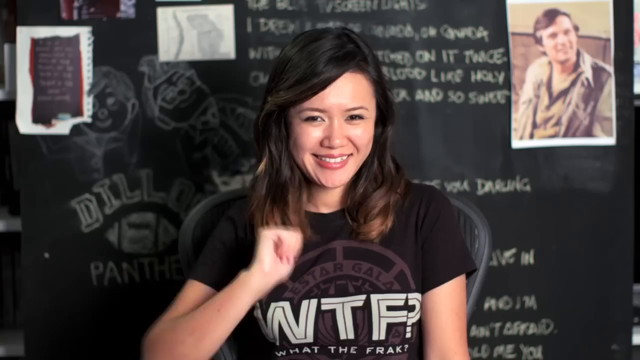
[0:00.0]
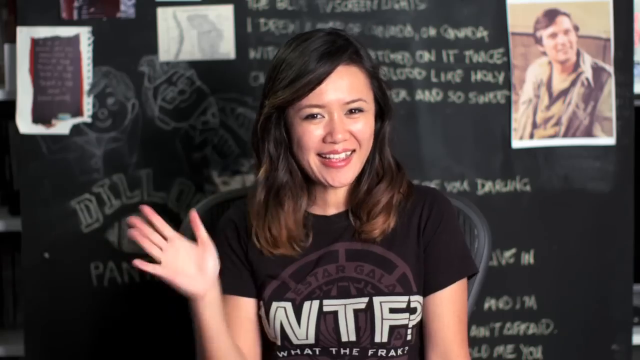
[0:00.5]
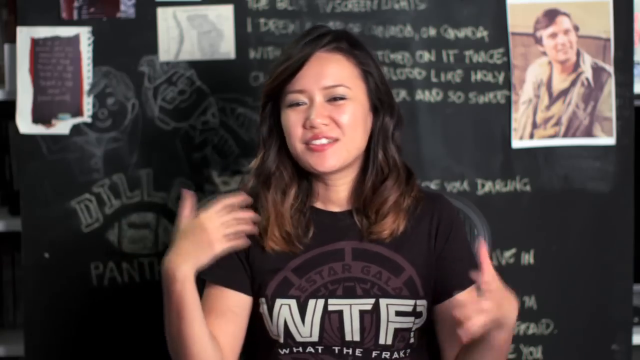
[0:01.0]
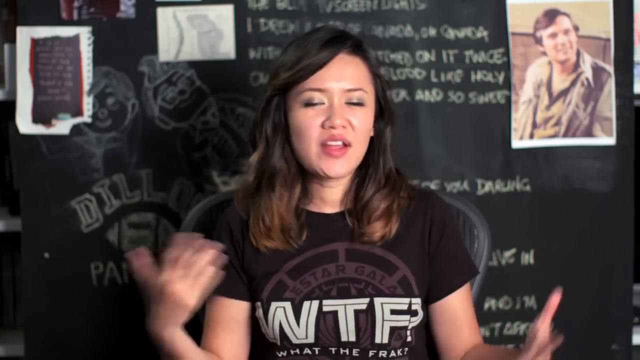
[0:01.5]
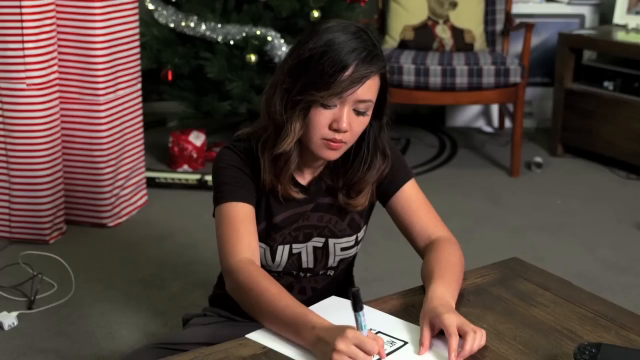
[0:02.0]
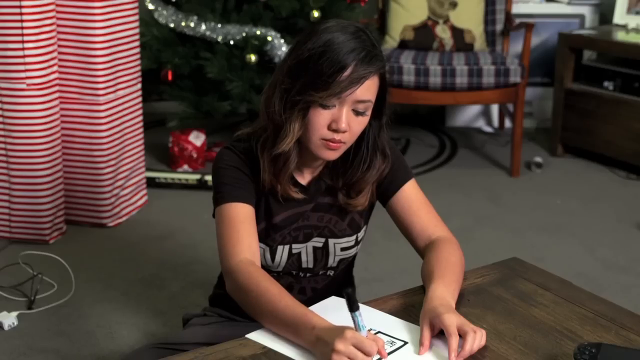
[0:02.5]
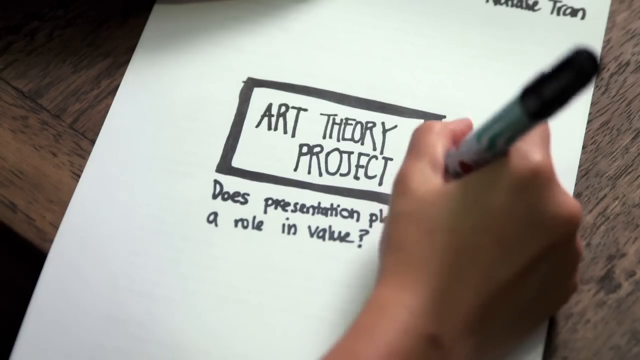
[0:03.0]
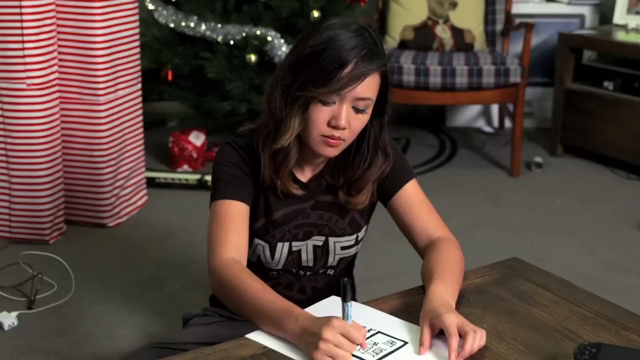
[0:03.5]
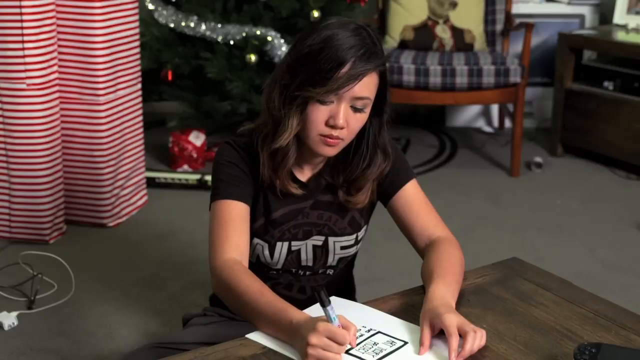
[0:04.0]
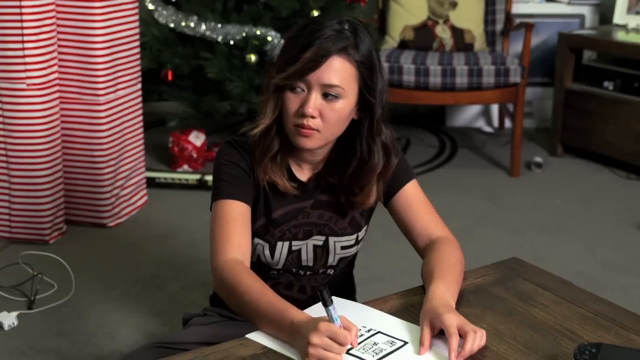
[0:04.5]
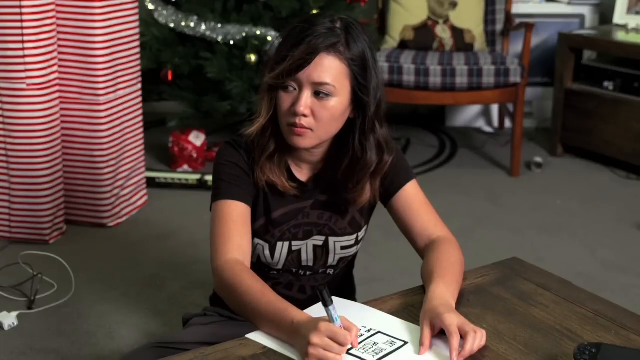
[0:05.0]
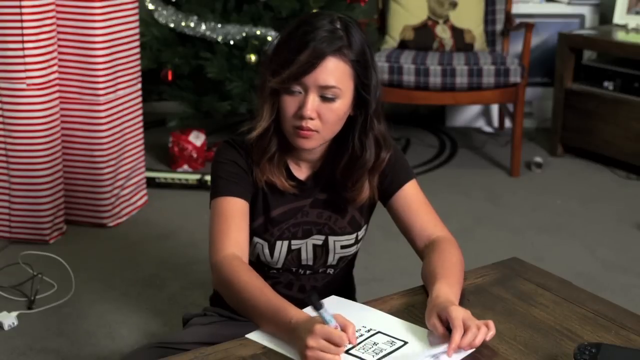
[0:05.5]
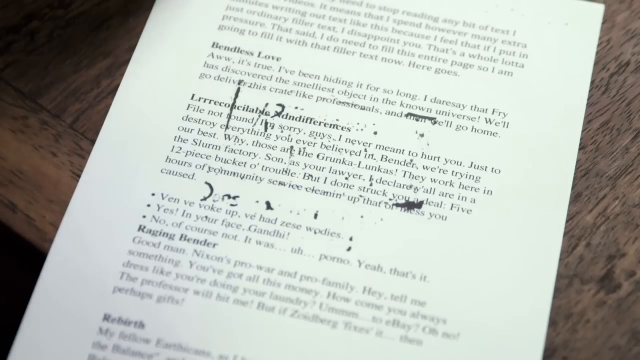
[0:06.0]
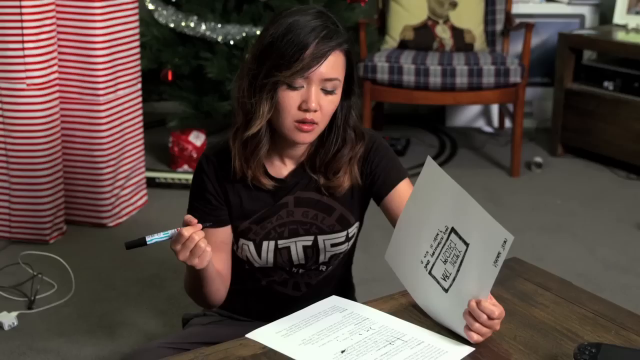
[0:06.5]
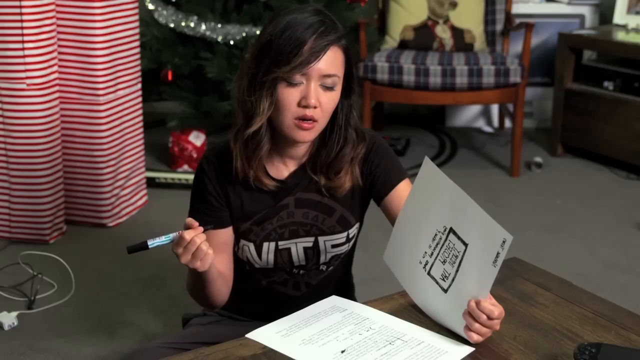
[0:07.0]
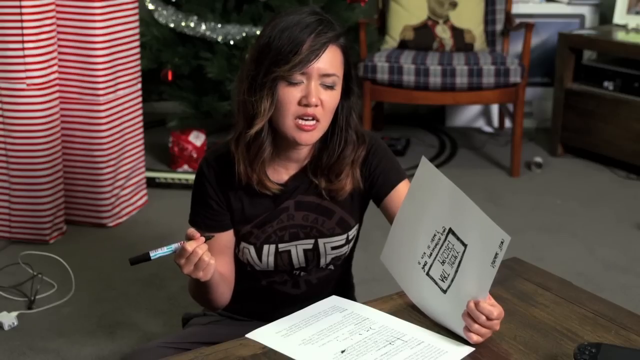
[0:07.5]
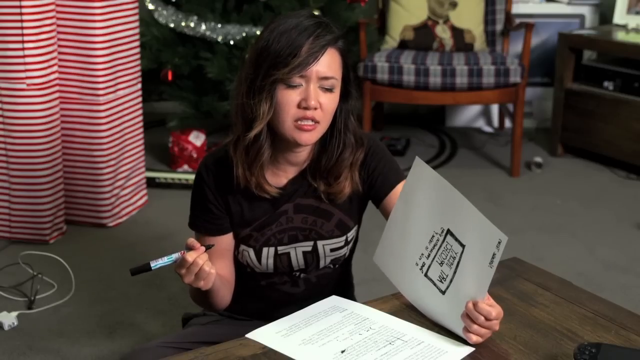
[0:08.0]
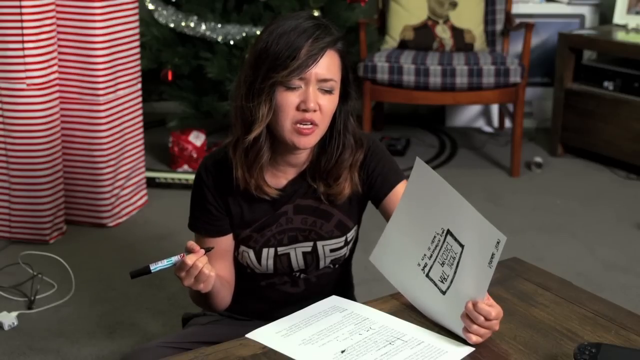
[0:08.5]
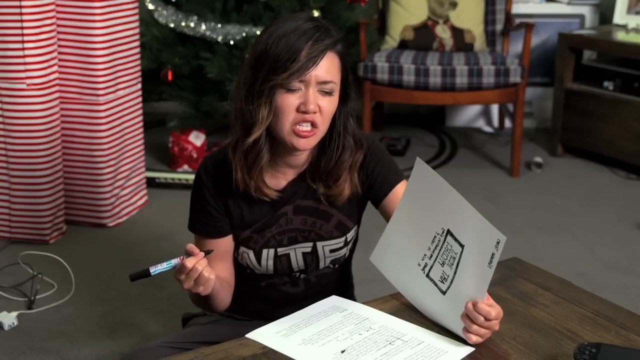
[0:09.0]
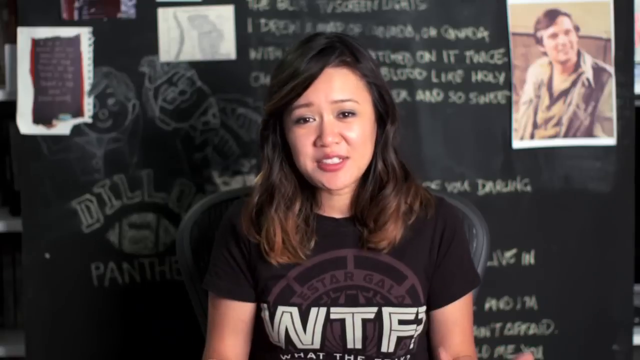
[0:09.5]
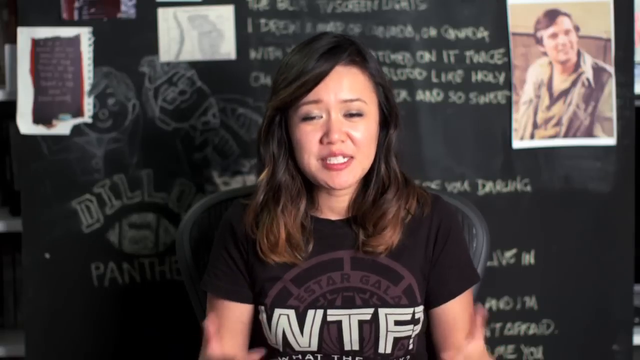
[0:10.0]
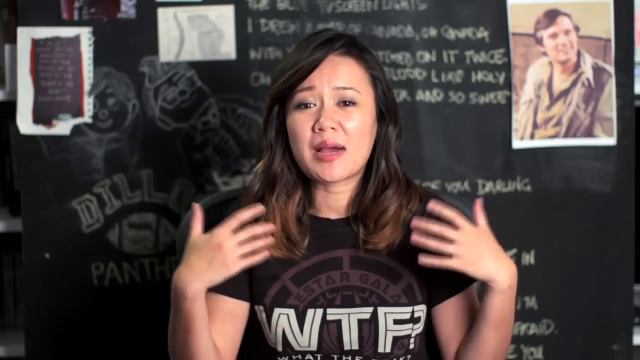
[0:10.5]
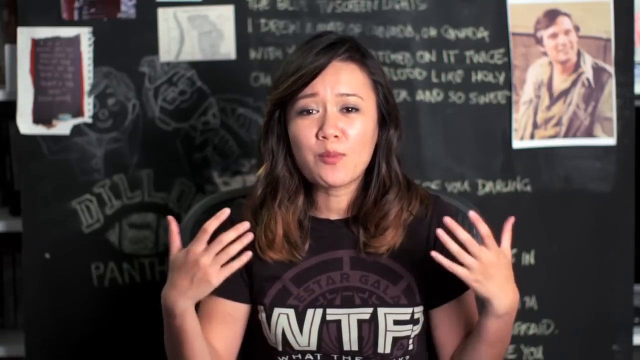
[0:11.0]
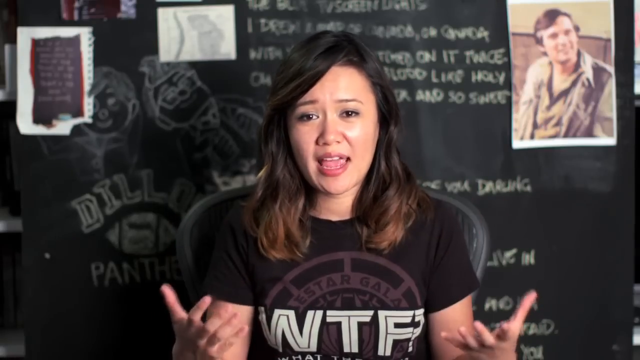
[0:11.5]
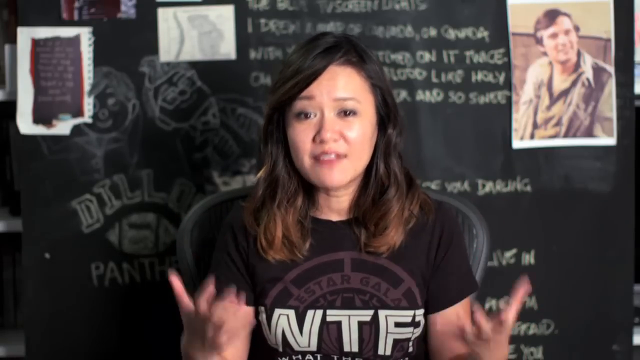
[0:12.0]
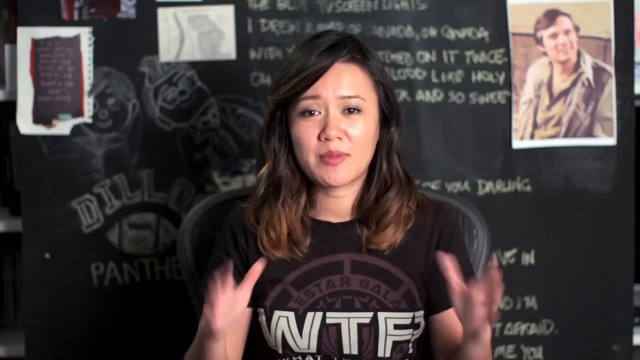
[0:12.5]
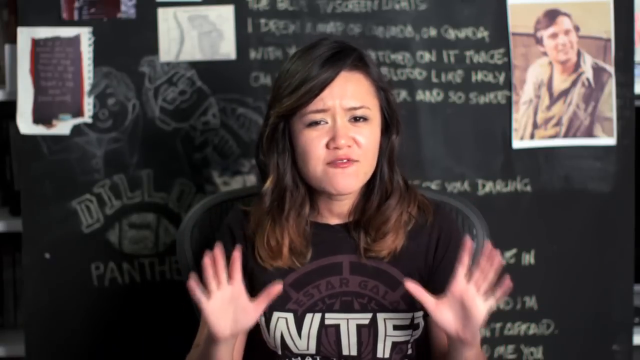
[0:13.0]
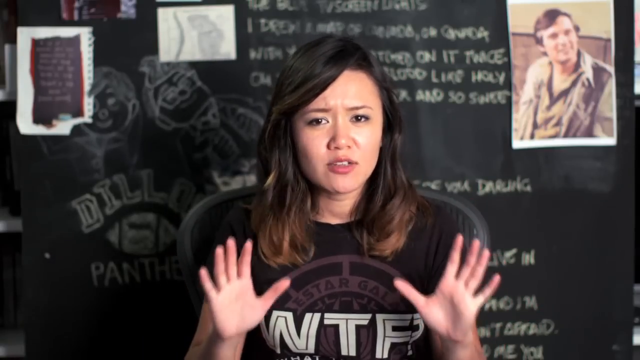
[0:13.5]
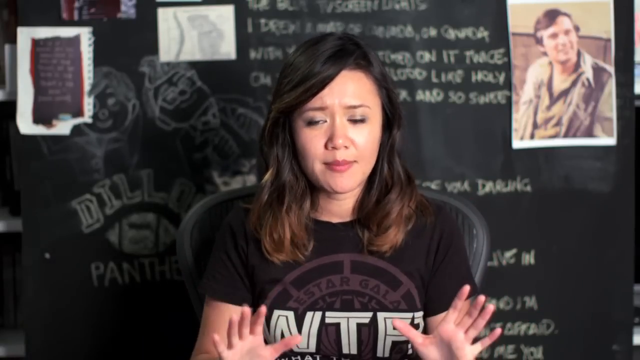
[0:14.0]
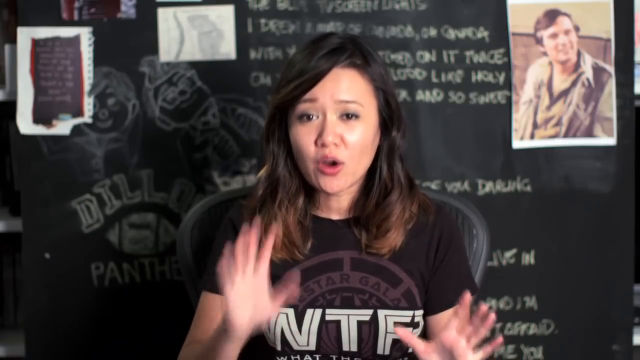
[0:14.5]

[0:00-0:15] A woman appears, followed by three pictures in three different panels. At the top, text reads "you know you're bad at gift wrapping" and "W...", and "more videos" appears above the three panels. One panel shows an elephant on a car; another is a picture of Trump and Kimball that says "fuck you Kimball"; the third is a picture of a woman with flags behind her that says "I'm exposing them now". Behind those things is a picture of a woman with "WTF?" on her shirt. In the upper left-hand side there is a circle with a picture of a woman wearing a red top, and in the upper right-hand side there is a picture of a man with an arrow and a square. On the right-hand side there is a circle with clock hands labeled "watch later" and an arrow labeled "share".